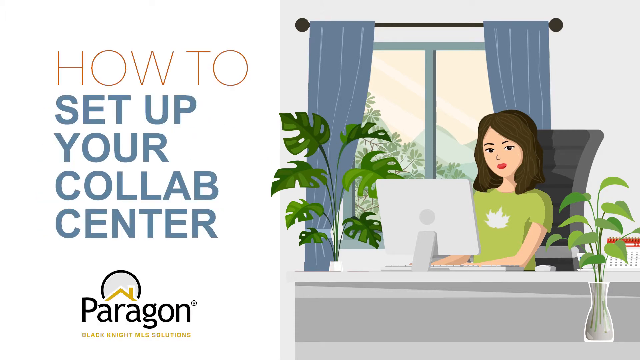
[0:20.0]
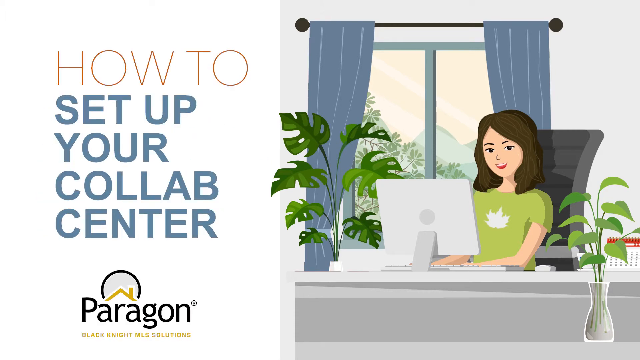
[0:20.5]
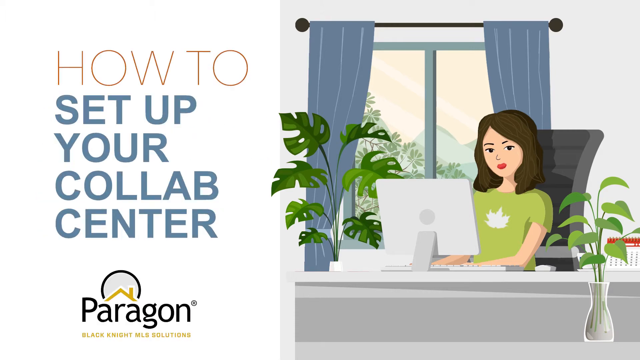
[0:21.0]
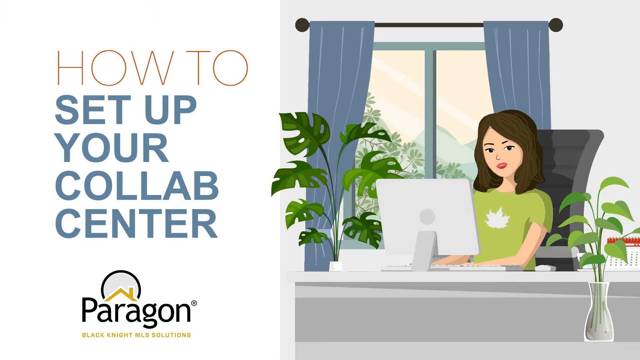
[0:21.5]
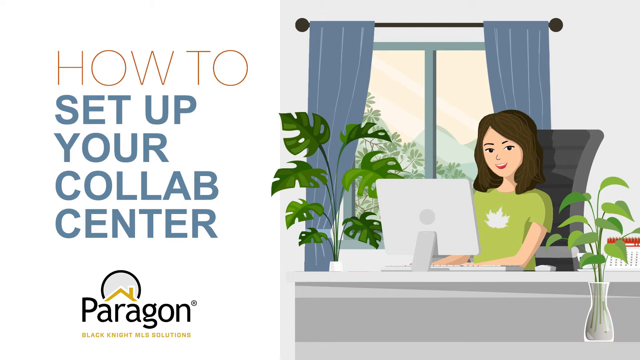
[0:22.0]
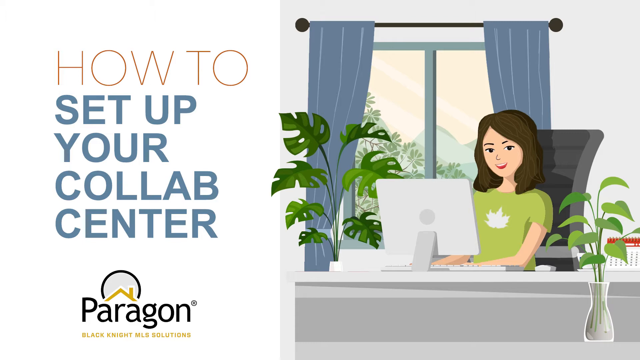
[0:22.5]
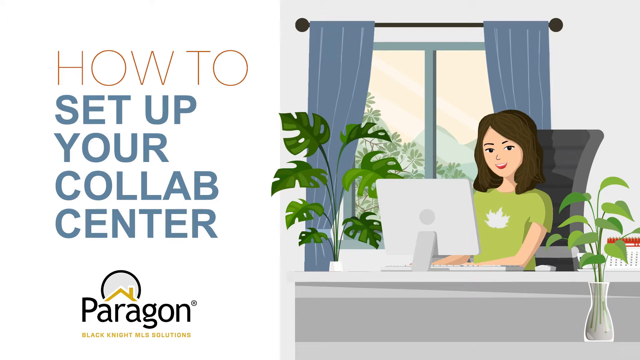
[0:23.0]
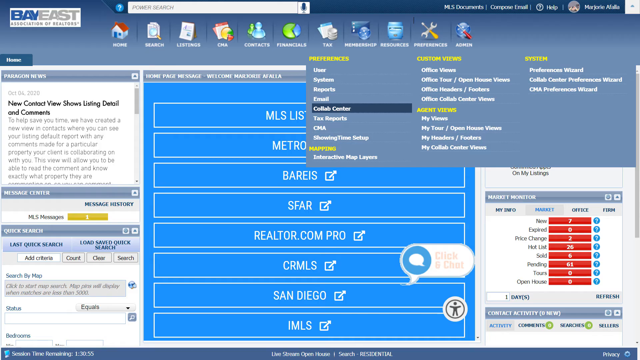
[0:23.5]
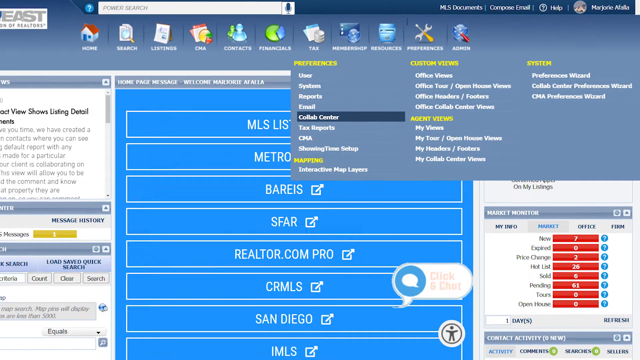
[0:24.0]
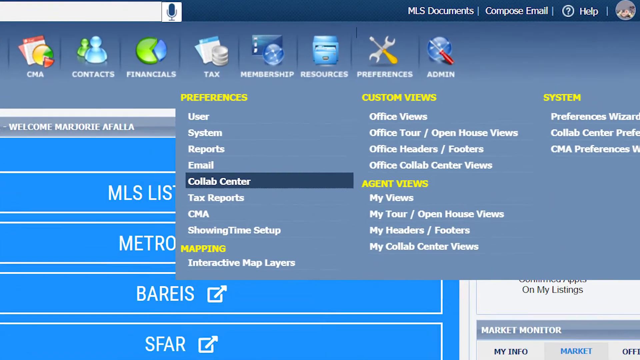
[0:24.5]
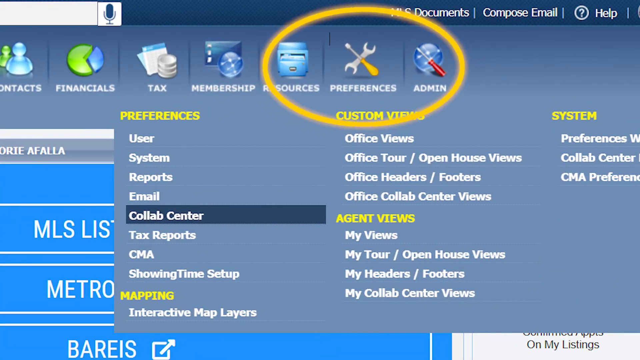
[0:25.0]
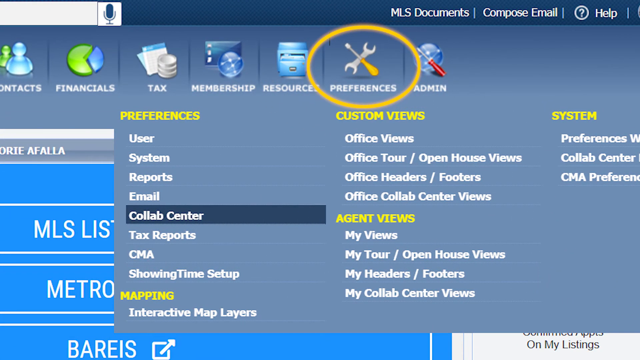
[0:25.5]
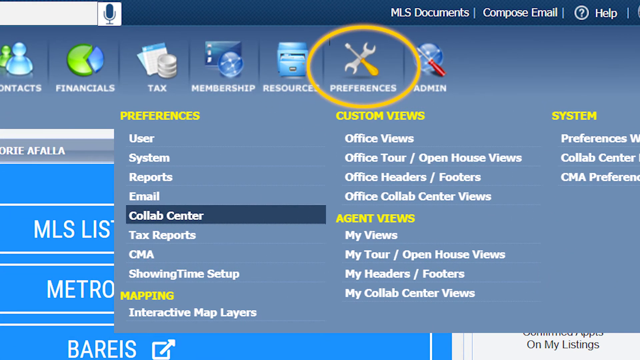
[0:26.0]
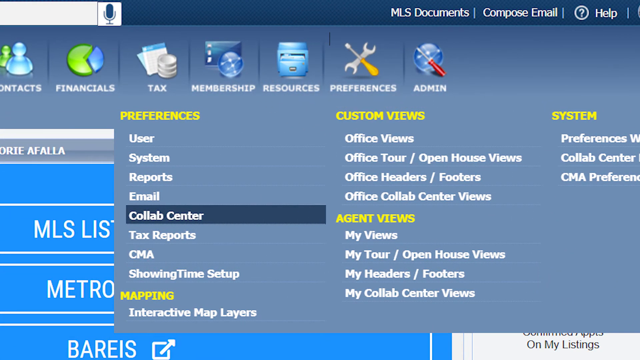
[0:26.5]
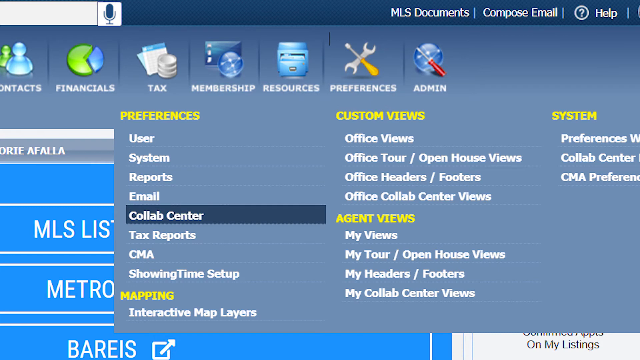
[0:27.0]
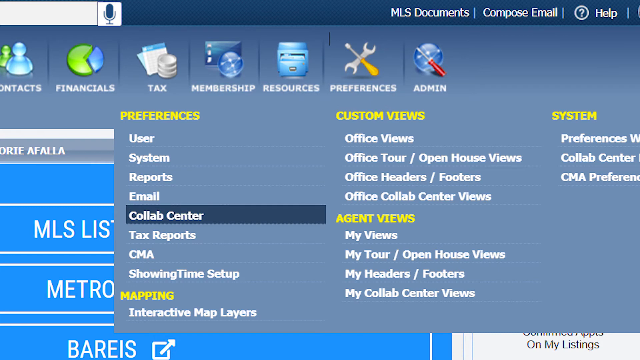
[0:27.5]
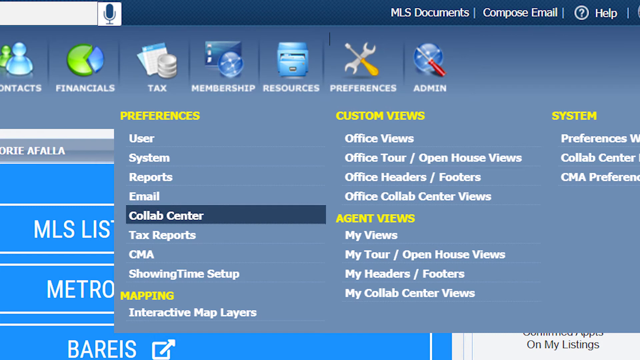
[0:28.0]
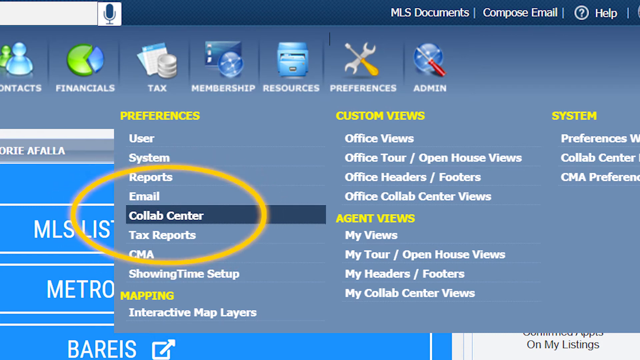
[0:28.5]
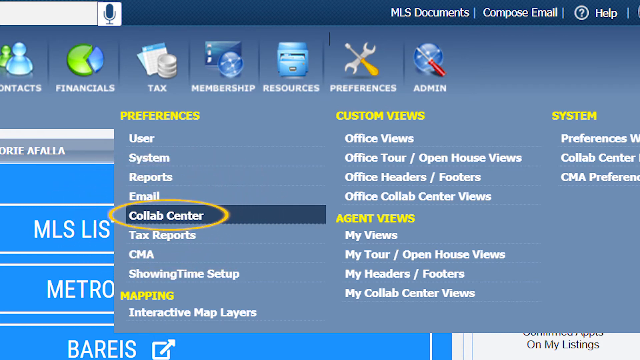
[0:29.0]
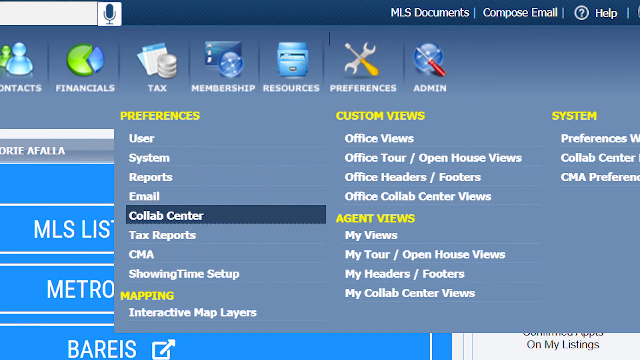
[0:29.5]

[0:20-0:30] An animated woman sits in her office in what looks like a computer chair or desk chair, with a monitor in front of her and her hands on a keyboard. She is next to a window with blue curtains, and there are two plants in the office. A caption next to the picture is about how to set up your collab center, by Paragon. The view then changes to an application screen, a site that is apparently Bay East. The focus is on a tab labeled preferences, represented by a screwdriver and another tool, and preferences is circled. Under preferences are options including user system reports, emails, collab center, tech reports, CMA, and show time set up. There is also a mapping option with interactive mapping layers and a custom view, office views listing office tours, office headers, and office collapse interviews, and an agent views tab with my view, my tour, my headers, and my collapse interviews. Nothing has been clicked yet. The collab center tab is highlighted, with options for tax reports, CMA, and show time set up.